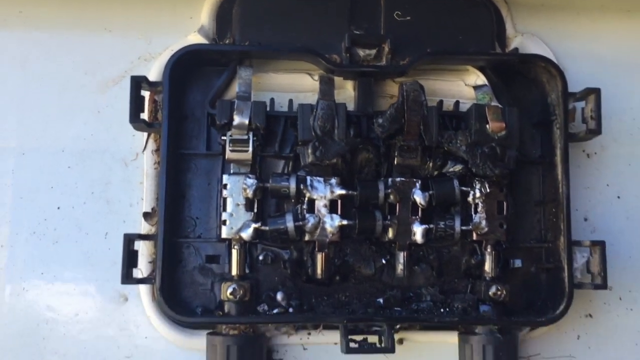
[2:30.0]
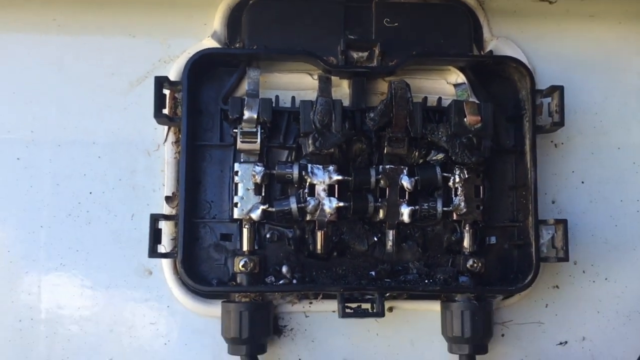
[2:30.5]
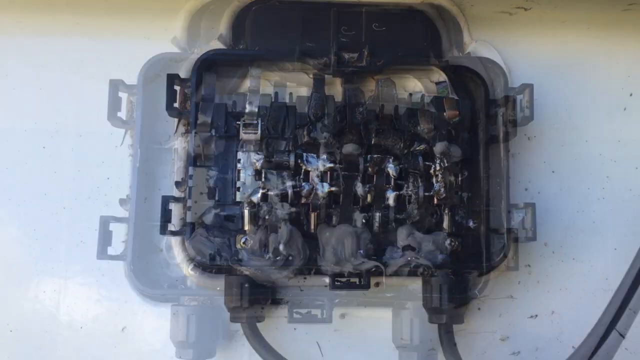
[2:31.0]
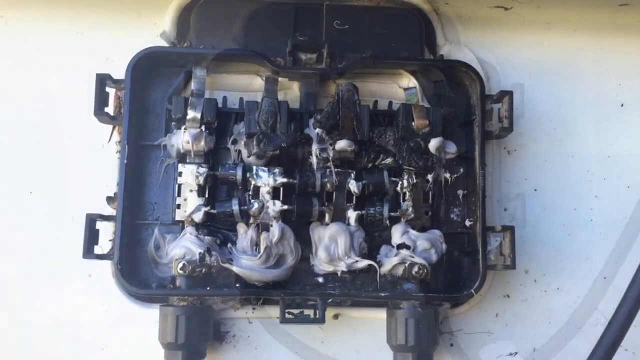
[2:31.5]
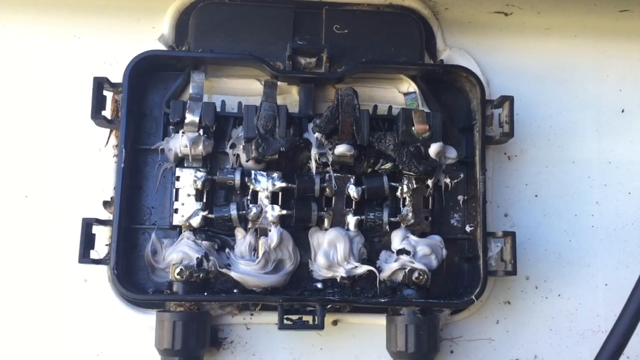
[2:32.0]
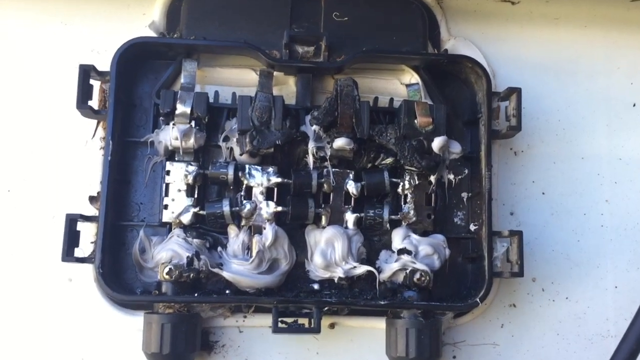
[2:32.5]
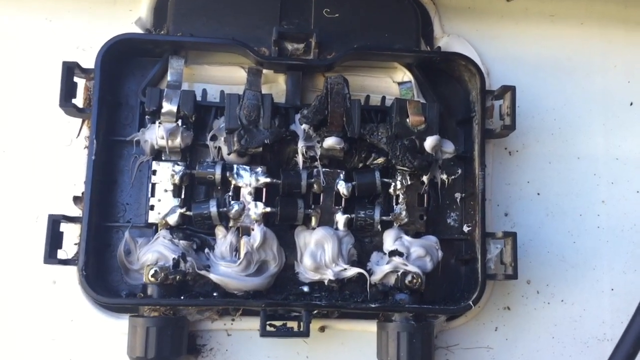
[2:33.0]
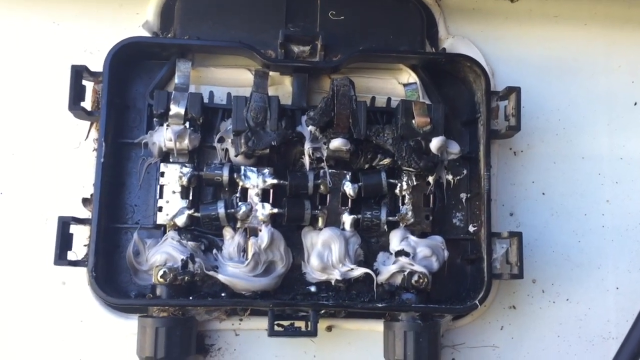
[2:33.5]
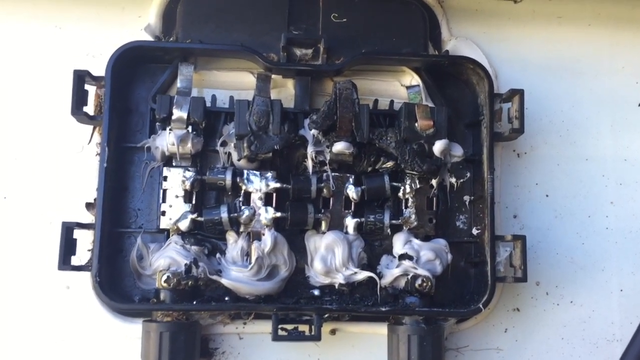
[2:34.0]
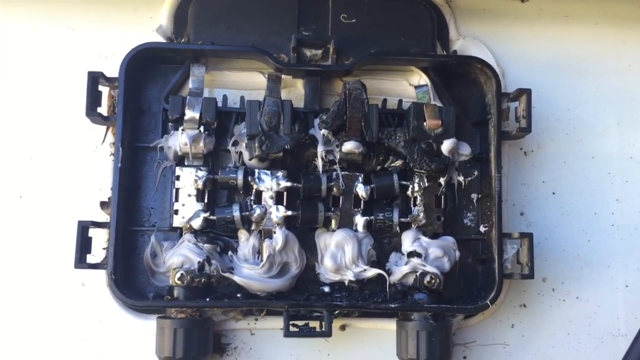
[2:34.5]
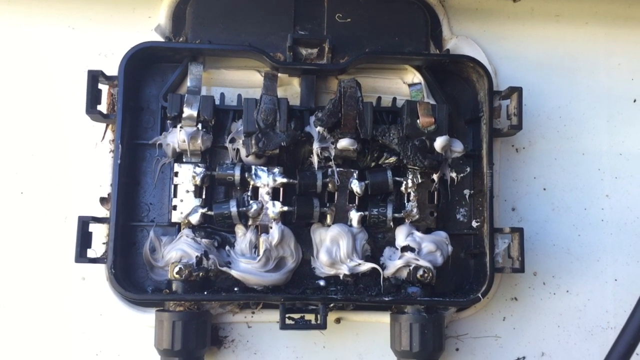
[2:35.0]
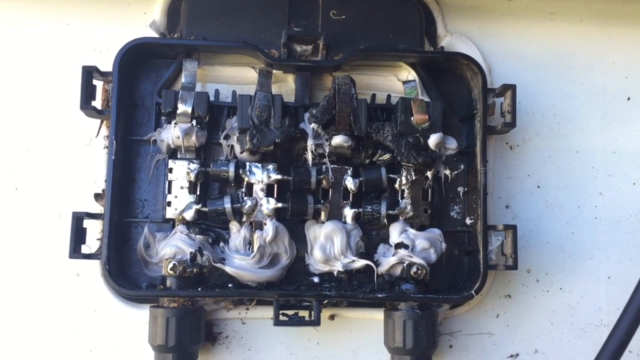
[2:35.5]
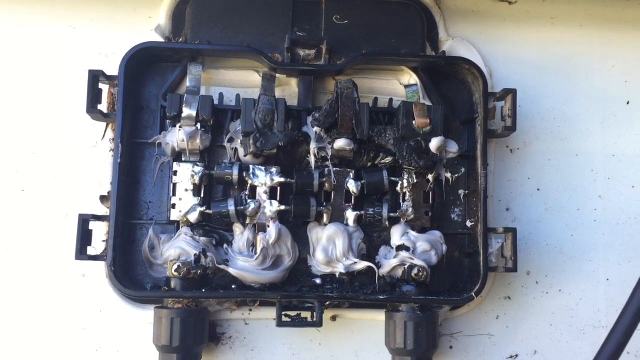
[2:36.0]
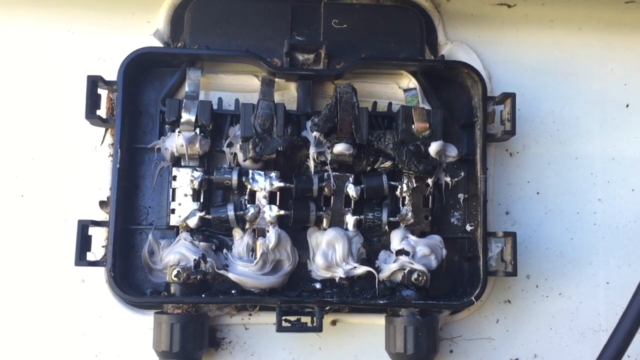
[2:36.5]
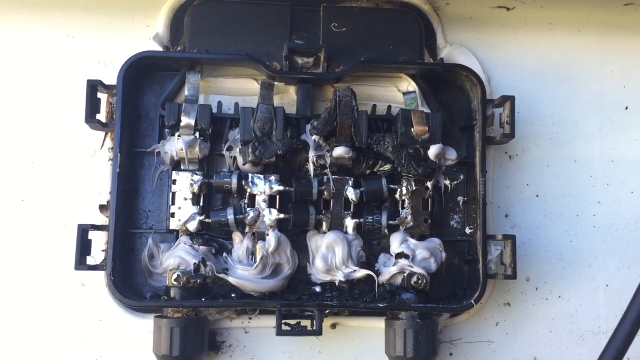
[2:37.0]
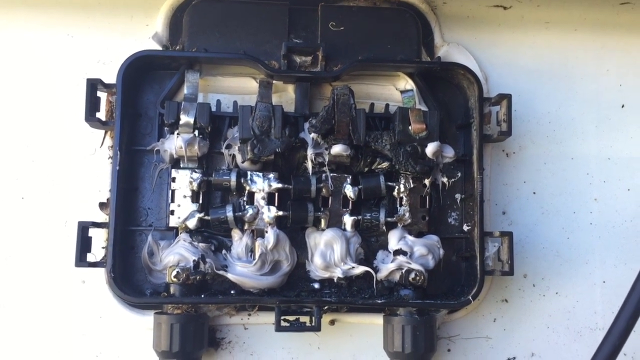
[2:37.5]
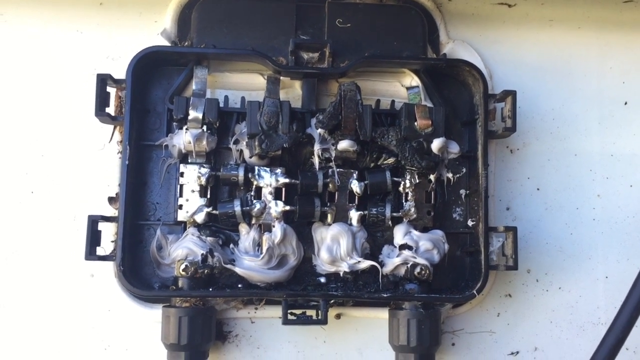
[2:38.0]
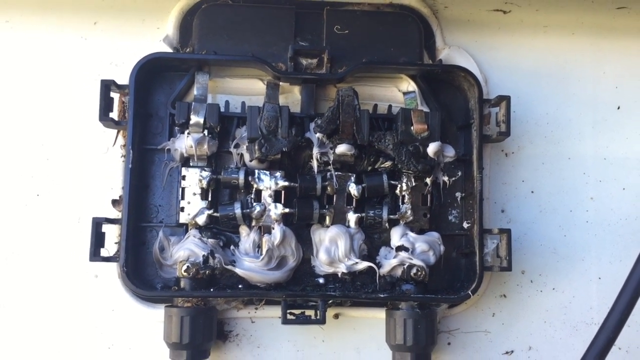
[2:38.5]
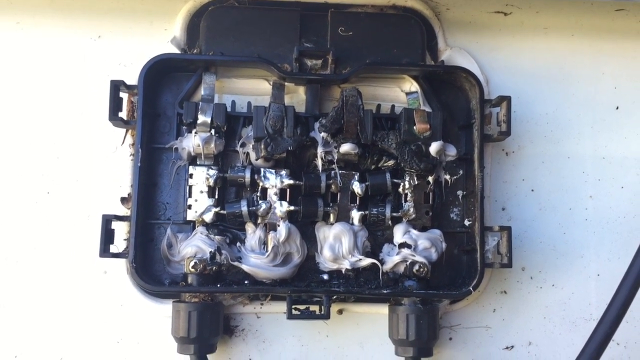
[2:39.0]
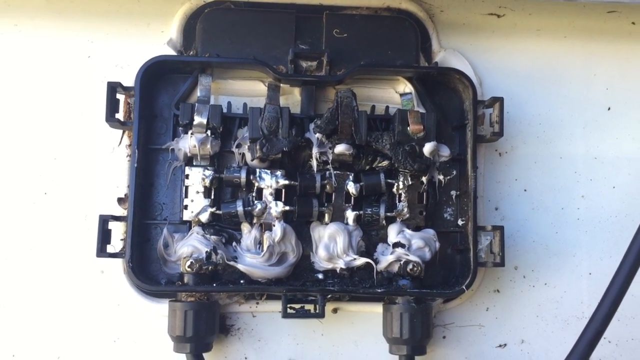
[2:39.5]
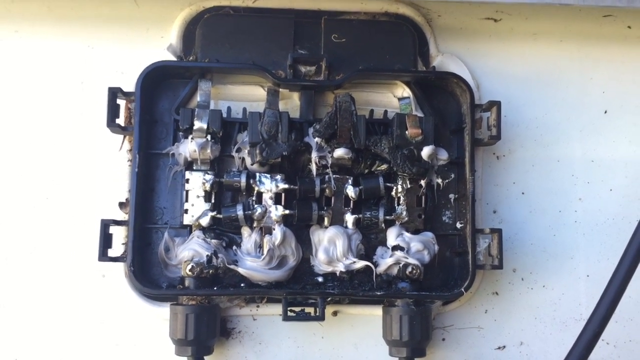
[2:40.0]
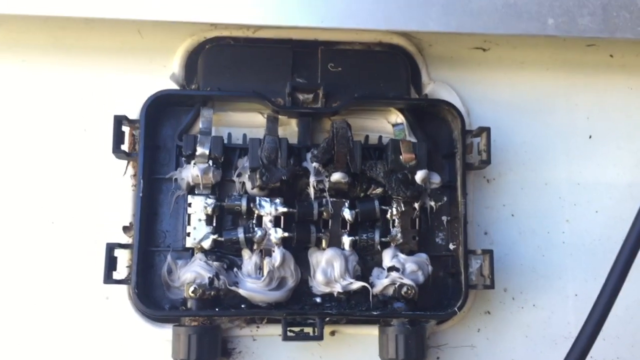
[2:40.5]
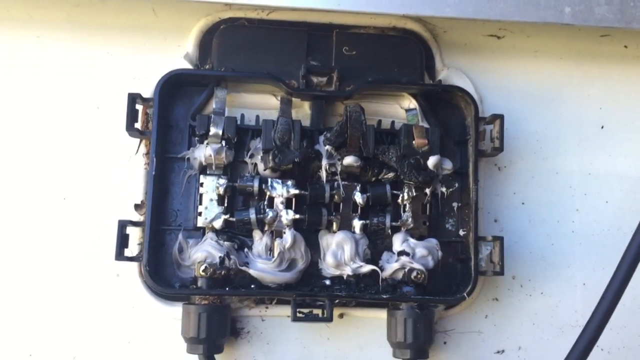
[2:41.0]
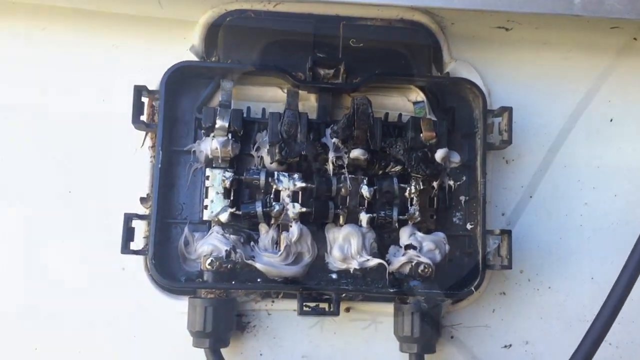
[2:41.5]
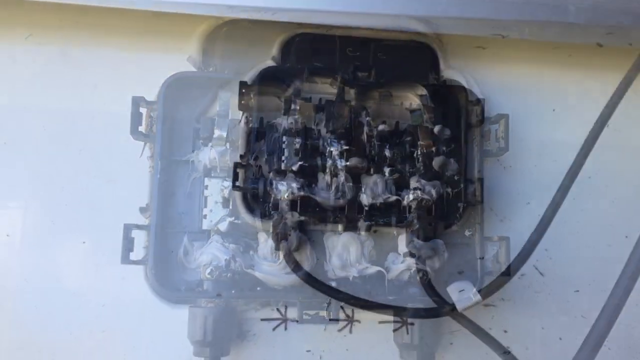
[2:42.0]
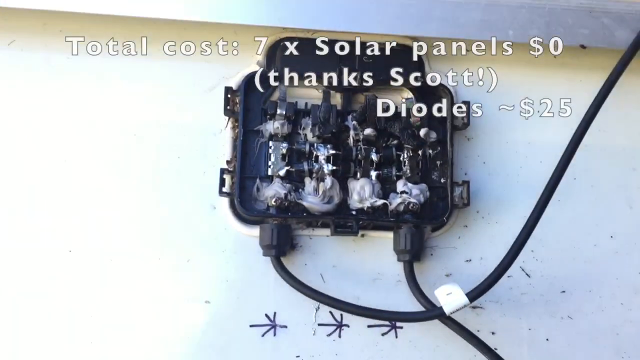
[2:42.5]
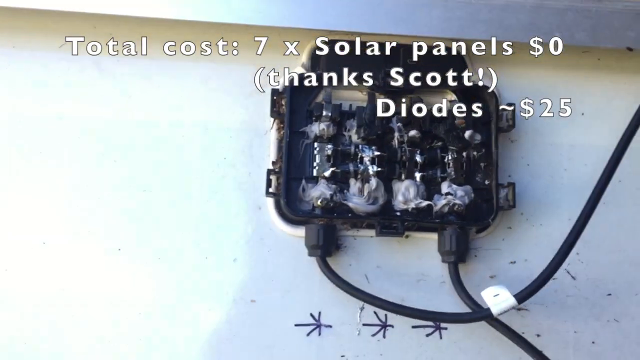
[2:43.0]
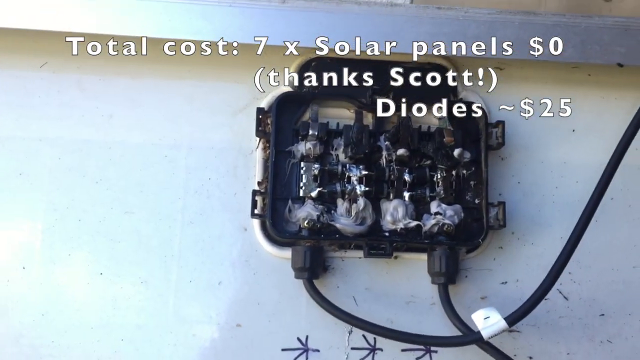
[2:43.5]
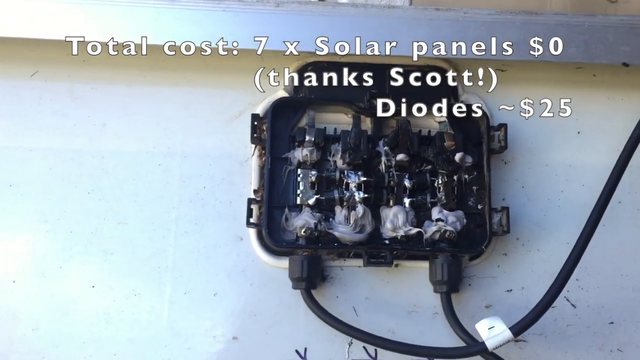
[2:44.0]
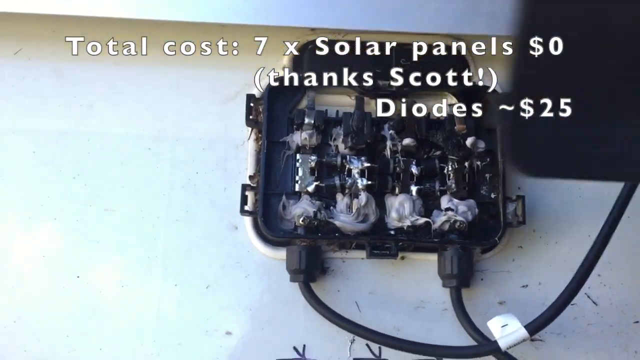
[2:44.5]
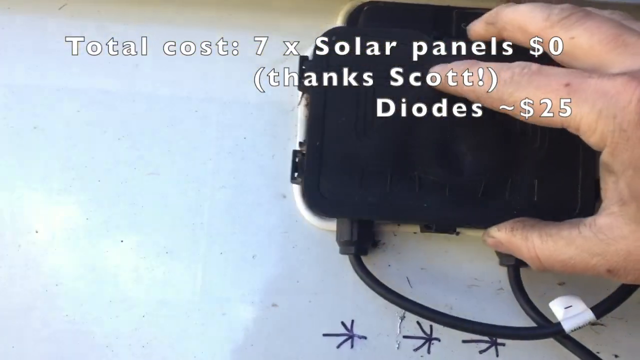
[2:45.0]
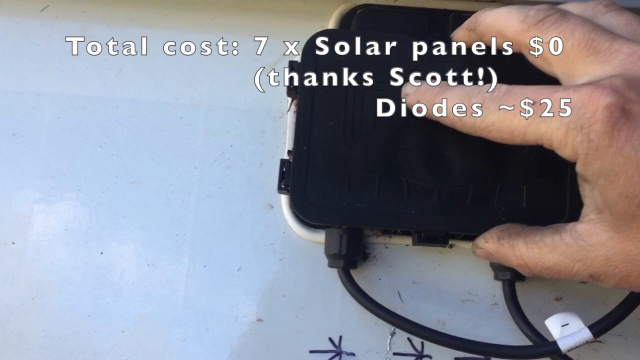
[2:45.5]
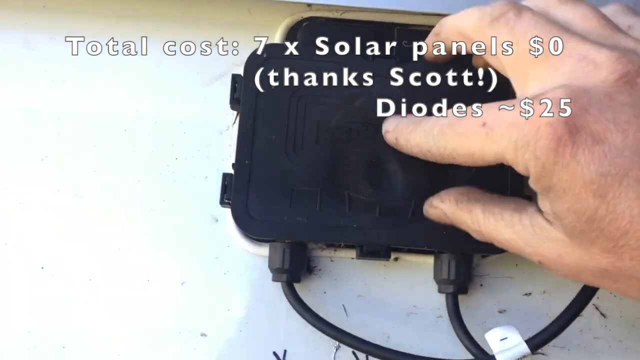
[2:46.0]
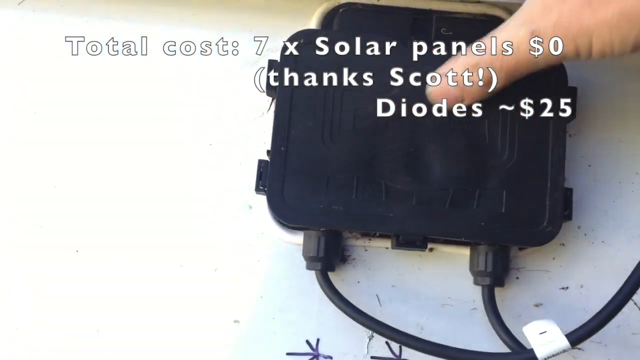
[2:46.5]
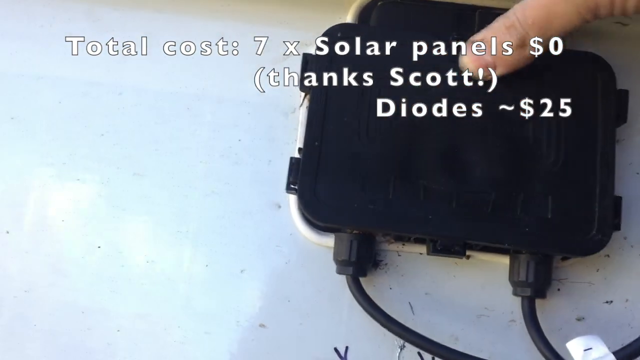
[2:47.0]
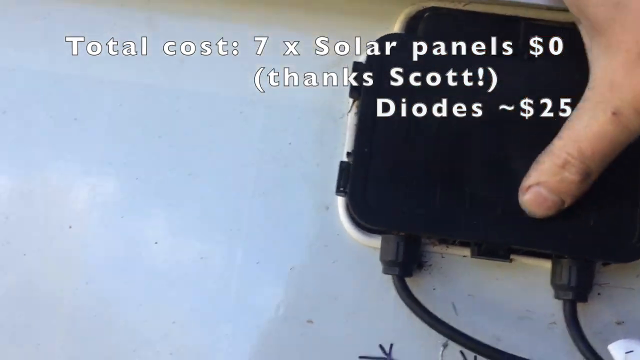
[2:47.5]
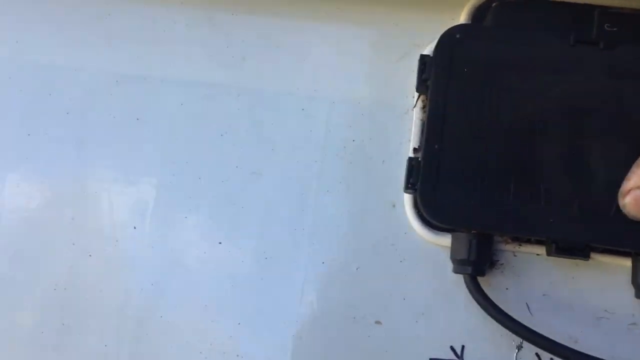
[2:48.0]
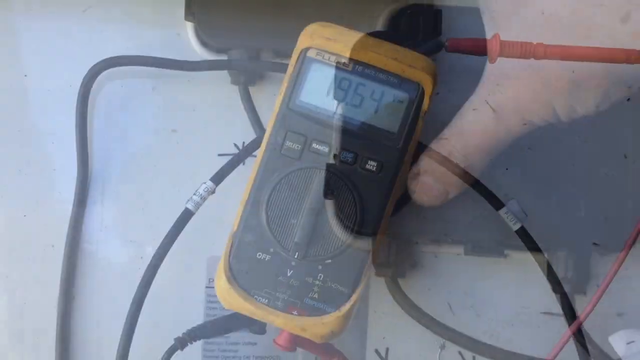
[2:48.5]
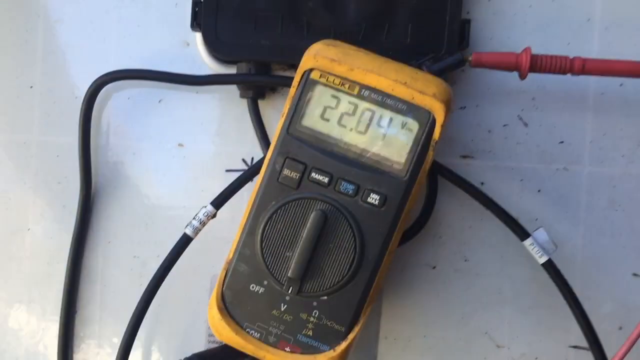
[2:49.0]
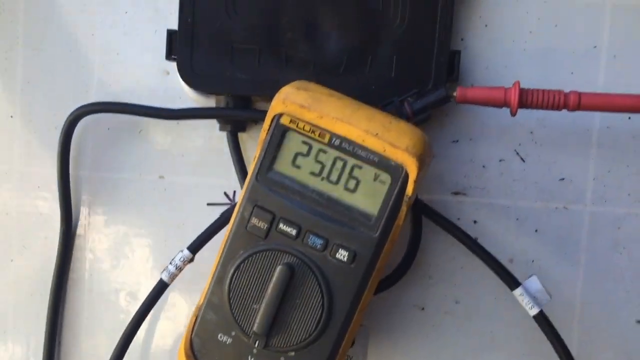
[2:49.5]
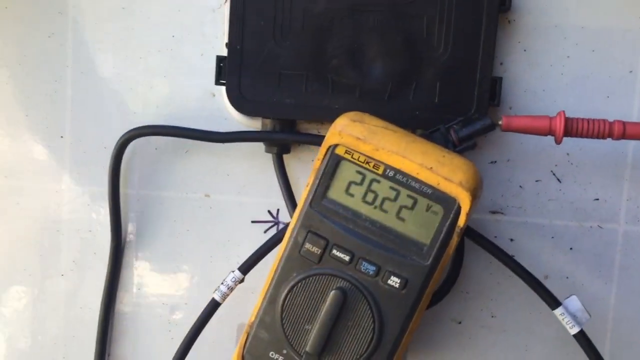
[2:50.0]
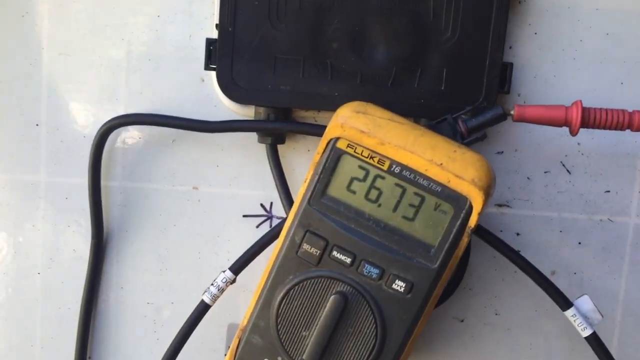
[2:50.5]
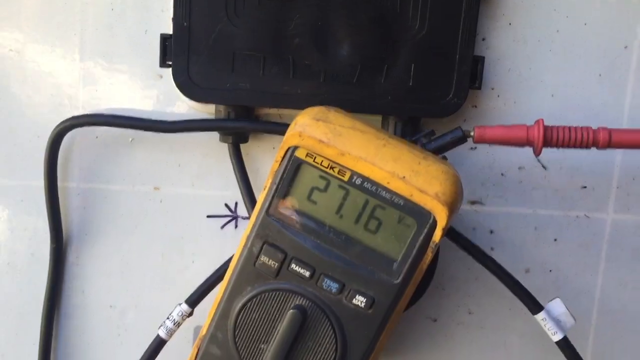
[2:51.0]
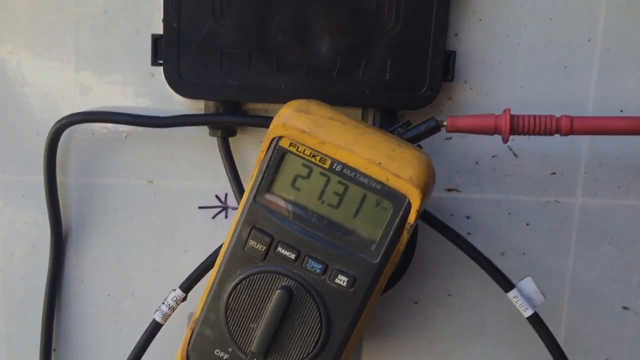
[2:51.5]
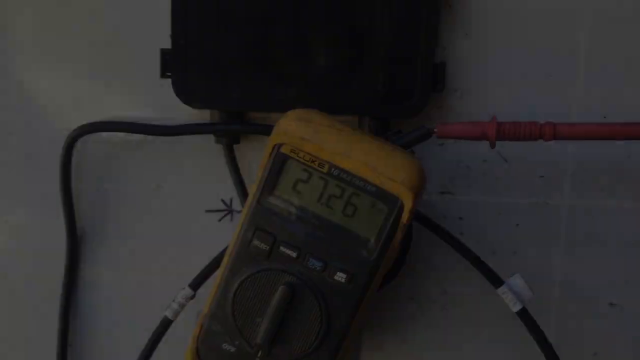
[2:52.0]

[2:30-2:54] A close-up shows an opened circuit box, rectangular and longer horizontally than vertically, that needs repair. Some of the circuits inside look quite black, perhaps from a bit of a burn. The box is attached to a white concrete wall with two small brackets on the right and left. The camera moves in and out shakily. Something white and gooey has been put on the lower half inside the box. Two cords come out of the bottom of the box, separated by a space; they meet below and are then pulled upward off to the right of the screen. White text appears reading "total cost seven times solar panels zero dollars", below that in parentheses "thanks Scott!", and below that "diodes, price $25". The man's right hand appears from the right side, takes the black cover of the box and snaps it back into place. Then there is a close-up of the tool he used earlier, right beneath the box: a rectangular yellow digital tool that reads "fluke" in black text in the upper left corner, with a digital screen below showing 26.50V in black.